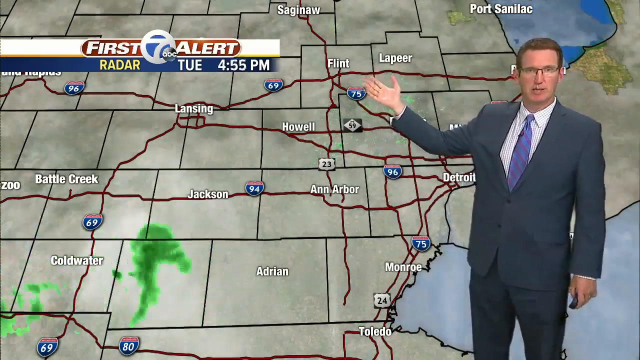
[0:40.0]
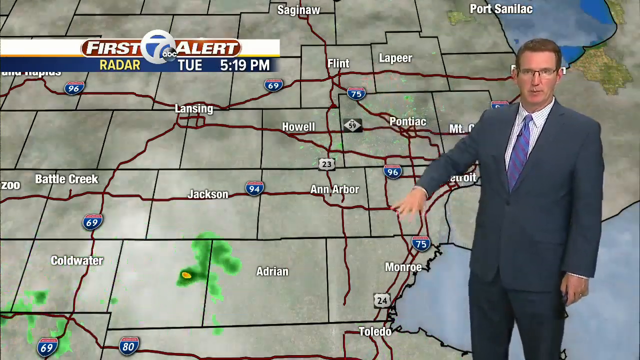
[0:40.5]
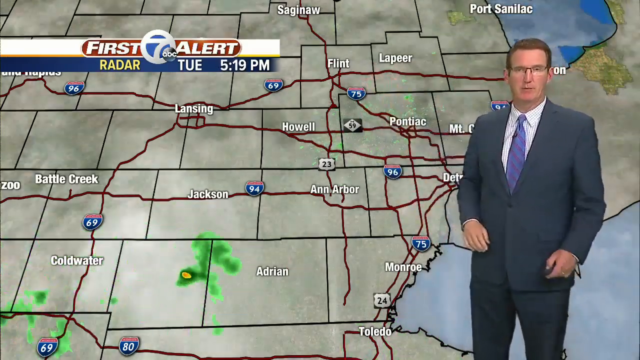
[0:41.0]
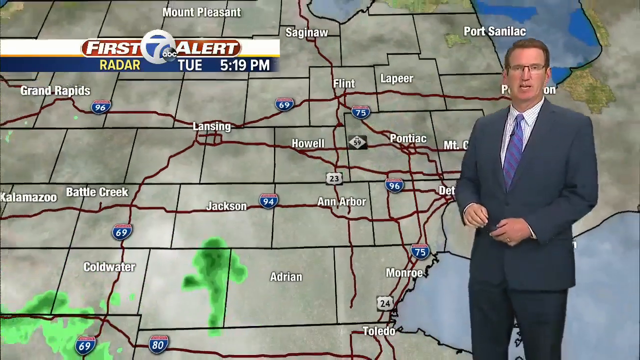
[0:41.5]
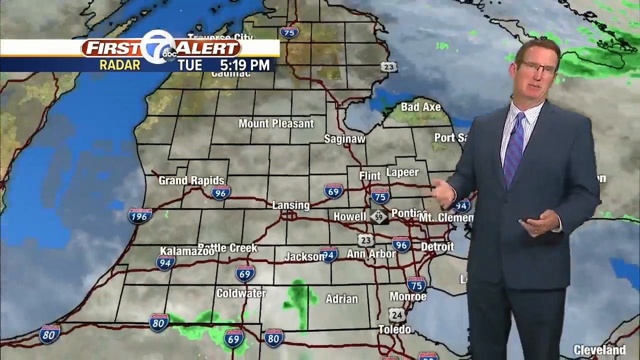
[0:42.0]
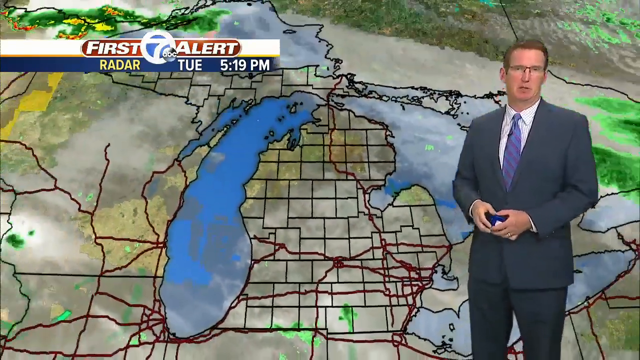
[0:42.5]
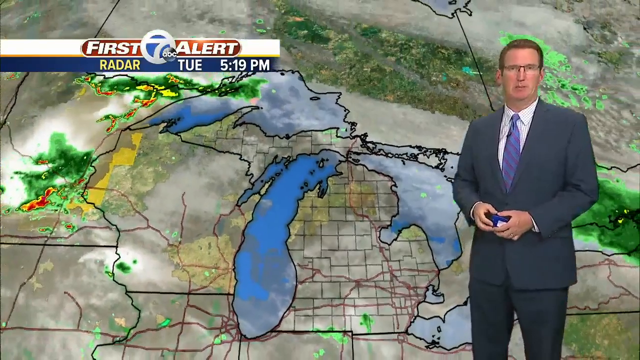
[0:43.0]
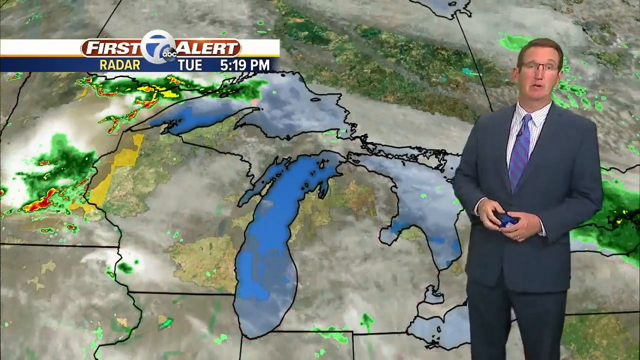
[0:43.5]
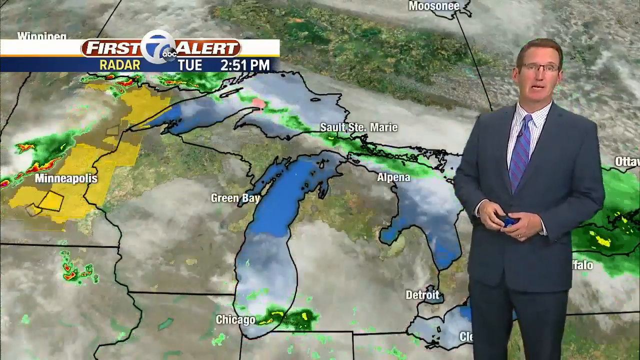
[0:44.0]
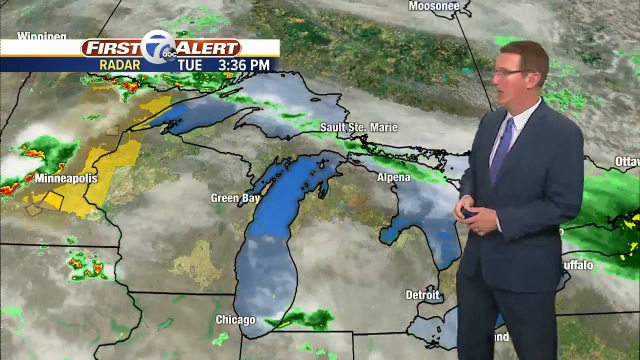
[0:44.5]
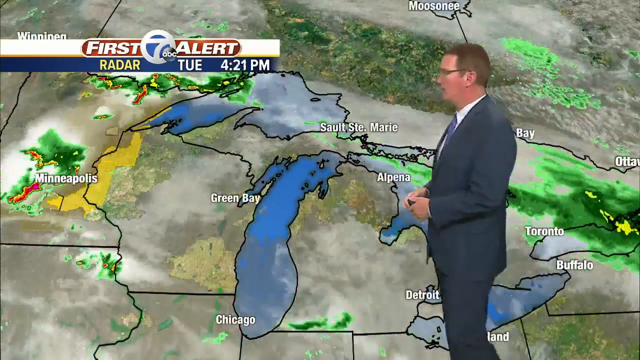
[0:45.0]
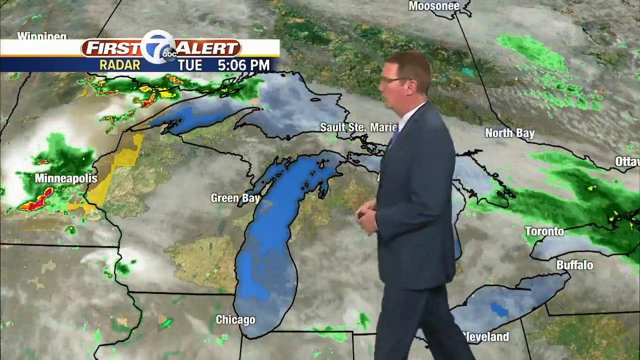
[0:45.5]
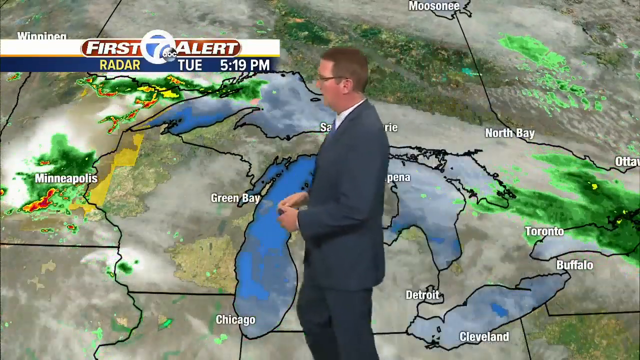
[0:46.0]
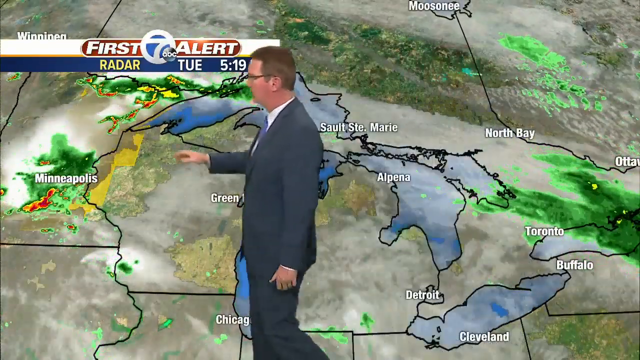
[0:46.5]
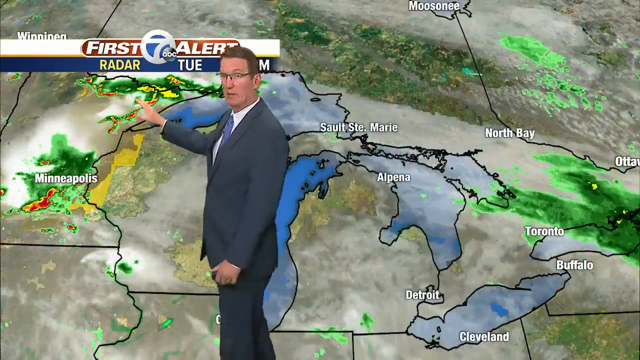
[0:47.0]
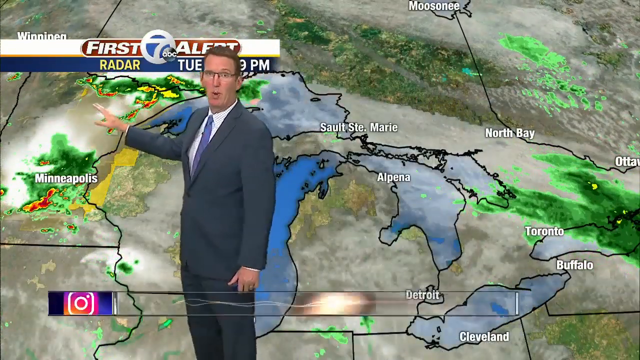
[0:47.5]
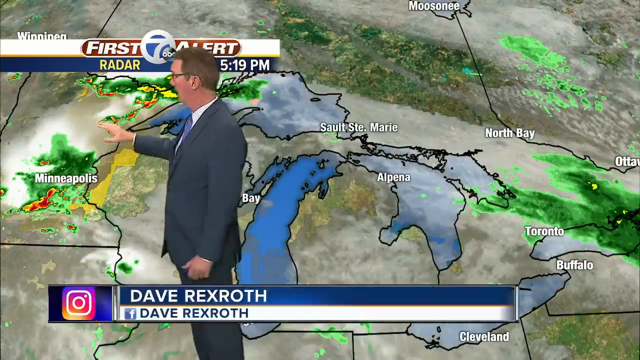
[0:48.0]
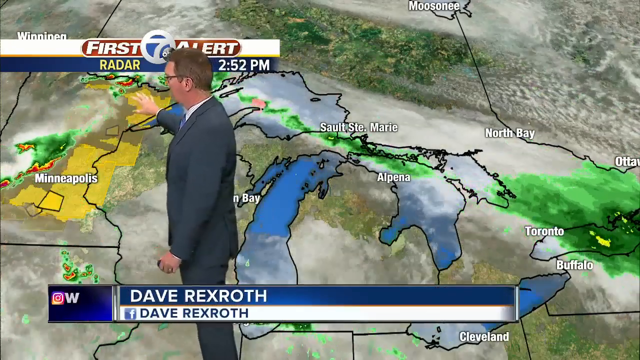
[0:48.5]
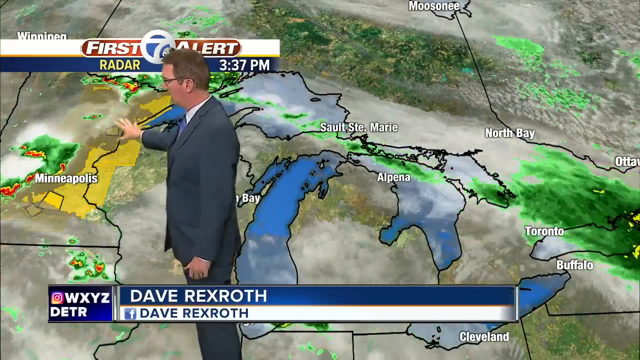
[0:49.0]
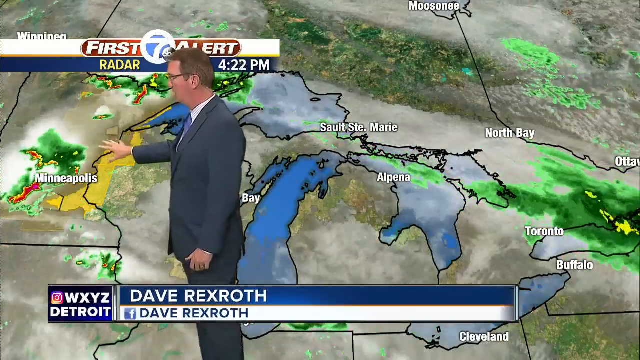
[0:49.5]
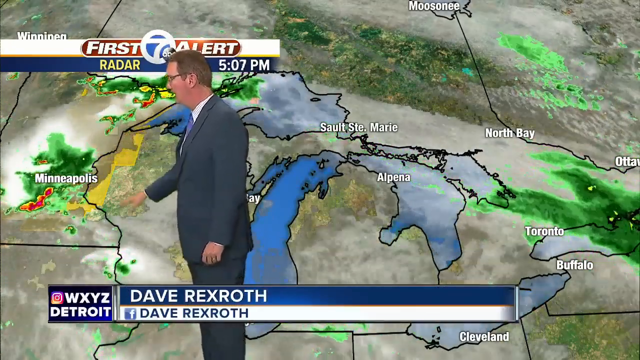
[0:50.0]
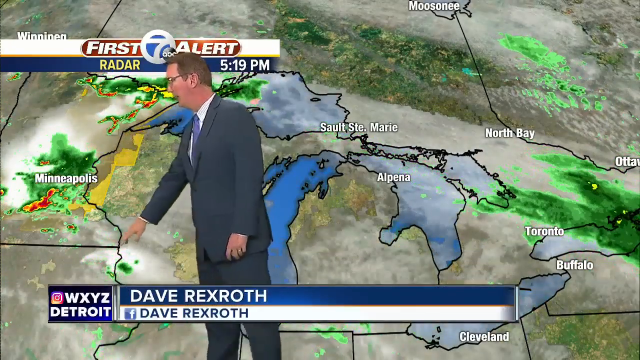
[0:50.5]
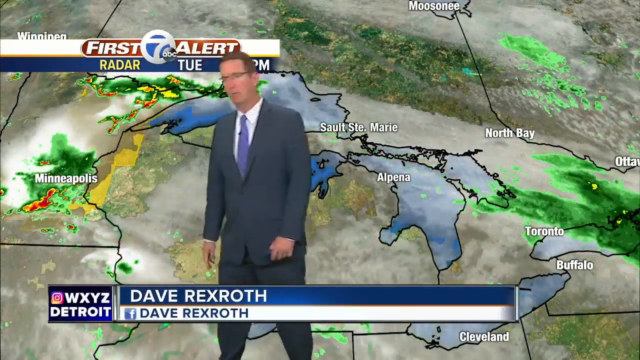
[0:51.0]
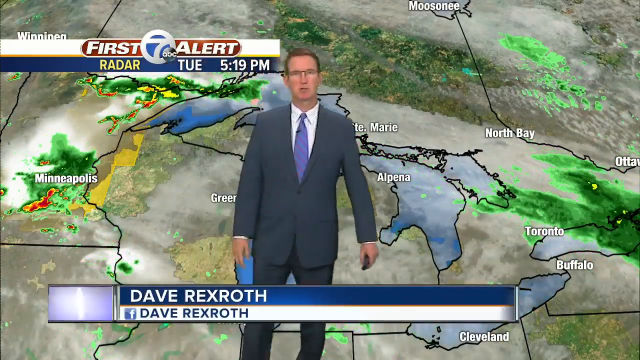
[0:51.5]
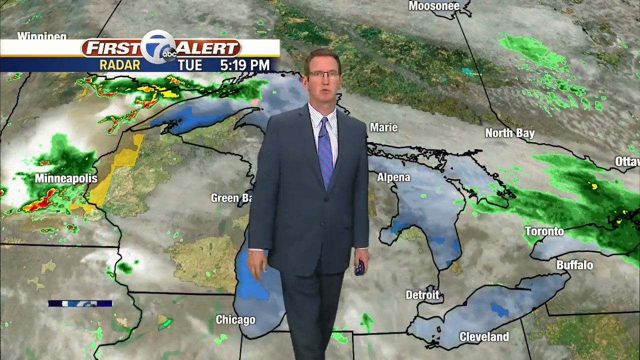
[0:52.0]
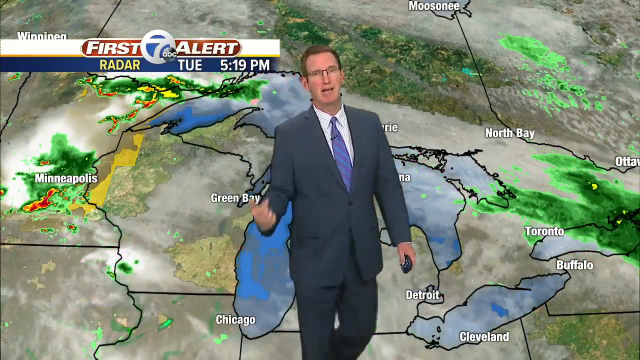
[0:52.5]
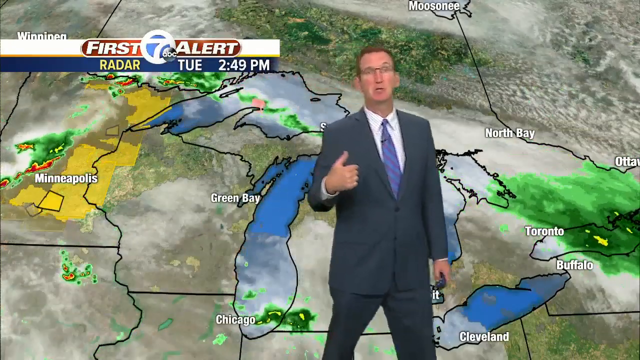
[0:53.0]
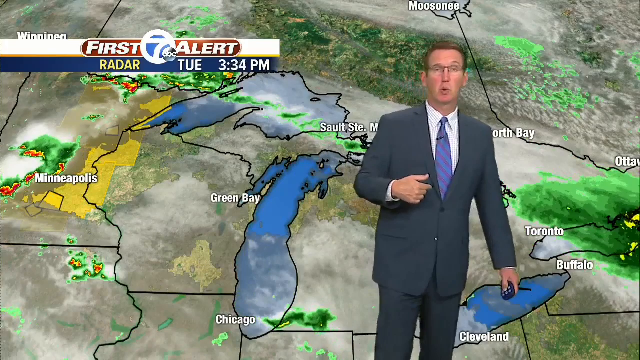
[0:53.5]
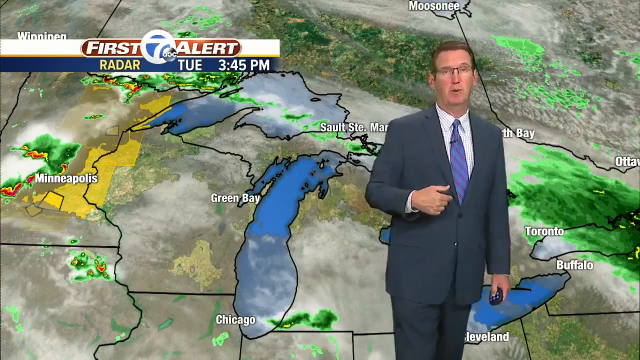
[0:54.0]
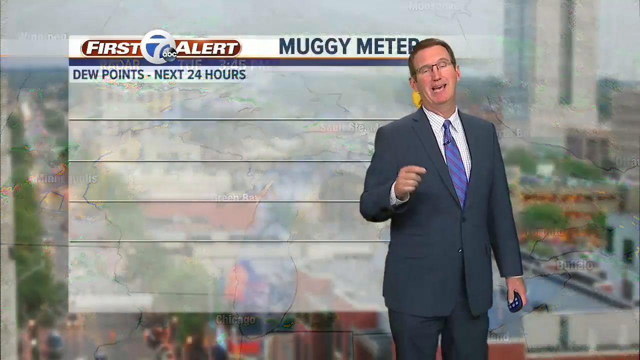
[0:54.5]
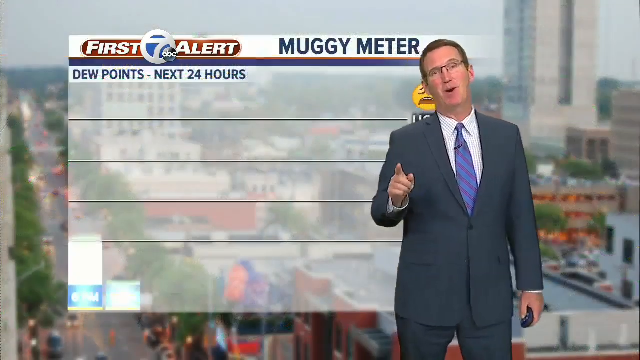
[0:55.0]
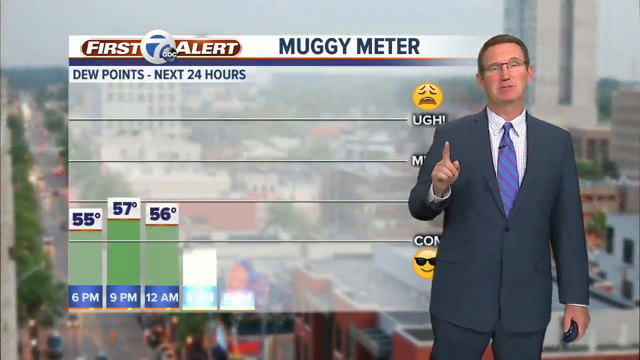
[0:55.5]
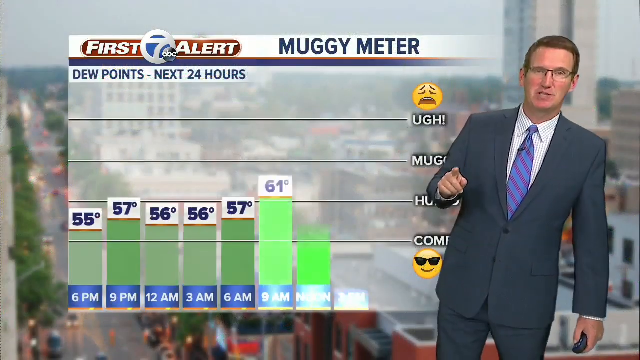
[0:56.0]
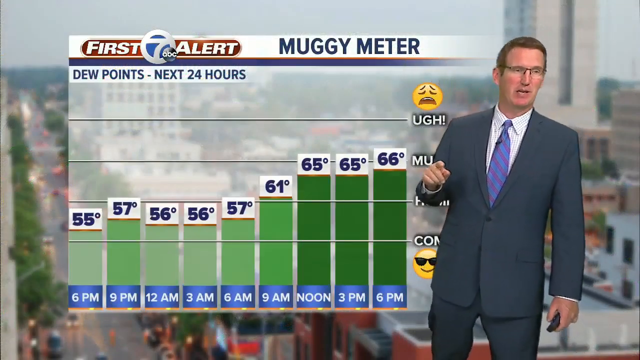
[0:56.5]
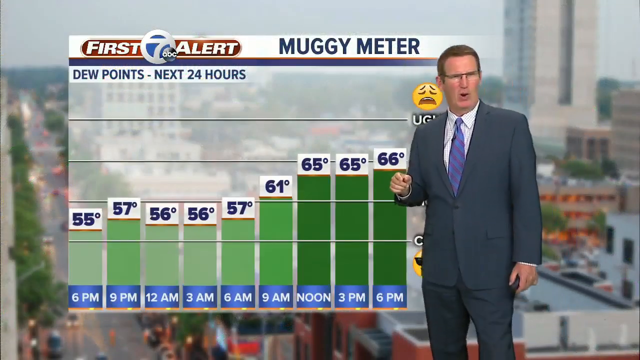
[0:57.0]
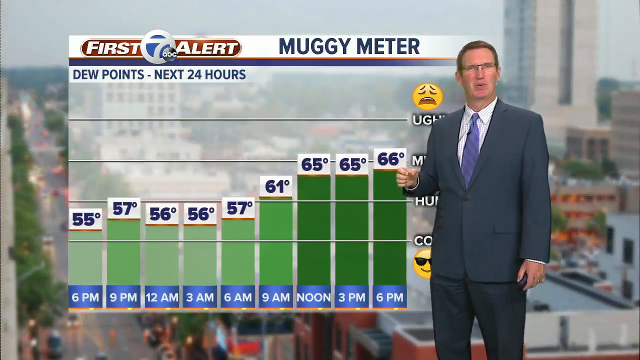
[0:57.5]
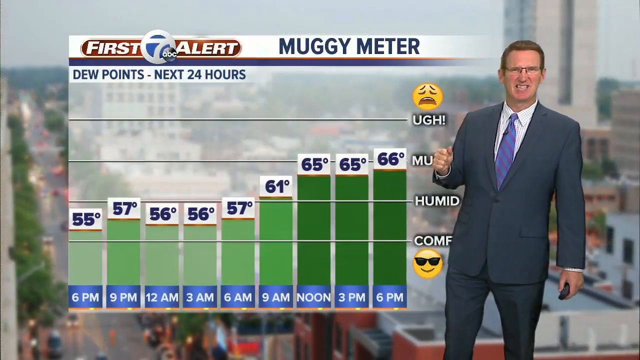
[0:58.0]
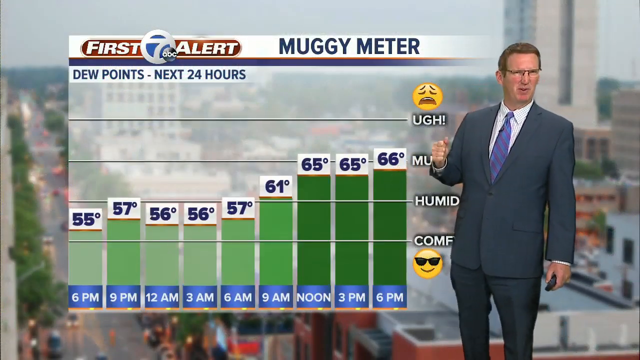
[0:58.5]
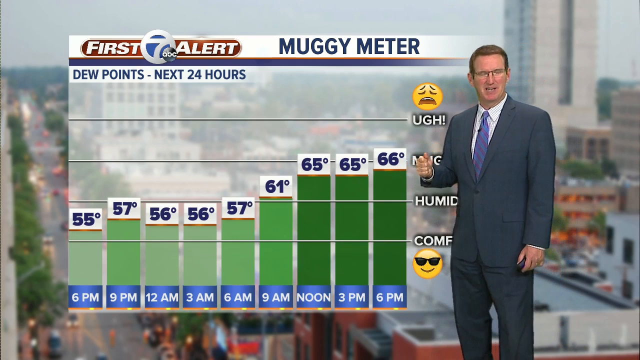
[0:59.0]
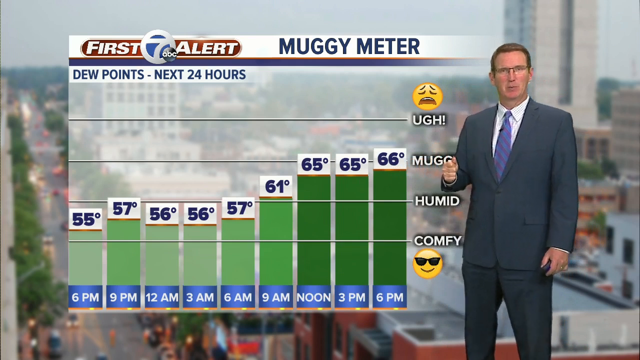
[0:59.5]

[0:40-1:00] A man in a white t-shirt shows different places as the forecast map moves to Minneapolis. His name is Dave Rexroth, with the same name given for Facebook. He shows dew points for the next 24 hours on a muggy meter: 6 p.m. 55 degrees, 9 p.m. 57 degrees, 12 a.m. 56 degrees, 3 a.m. 56 degrees, 6 a.m. 57 degrees, 9 a.m. 61 degrees, noon 65 degrees, 3 p.m. 65 degrees and 6 p.m. 66 degrees. Emojis for ach, comfort, humidity, mist and muggy are shown. He points at the radar for Tuesday at 4:55 p.m., and the map navigates around different towns showing the weather conditions for Tuesday afternoon and Tuesday night.